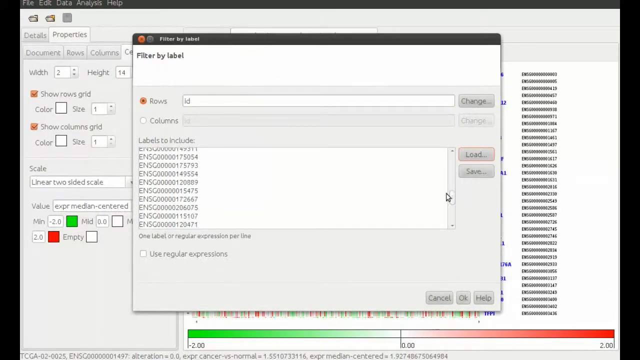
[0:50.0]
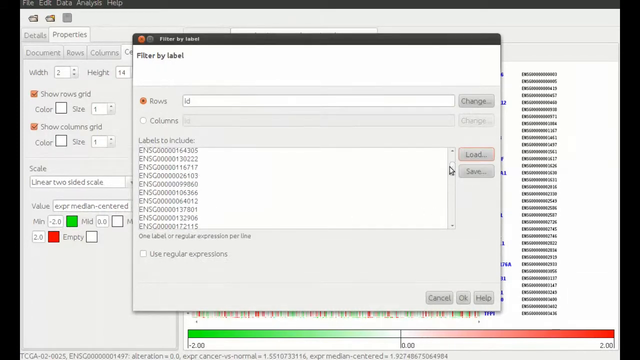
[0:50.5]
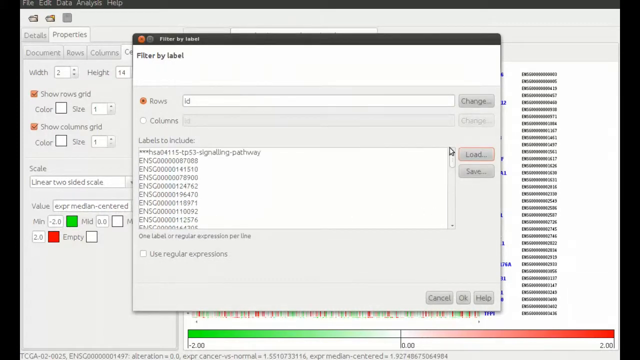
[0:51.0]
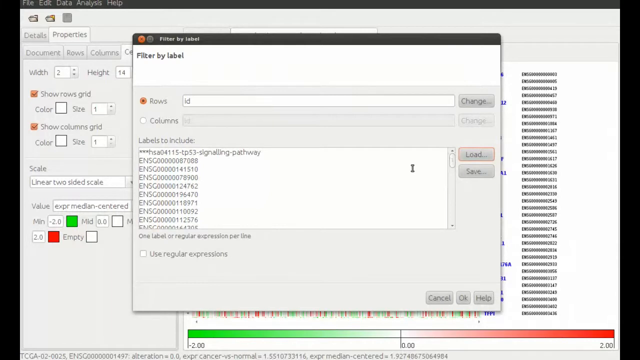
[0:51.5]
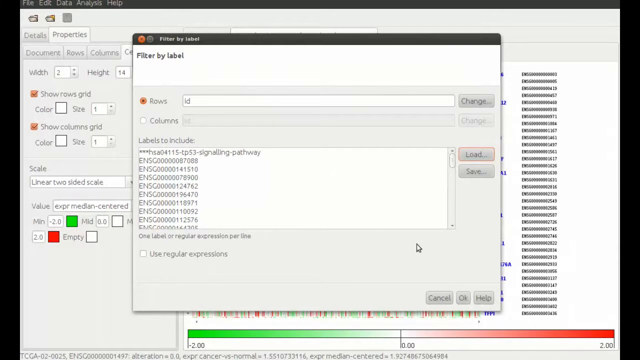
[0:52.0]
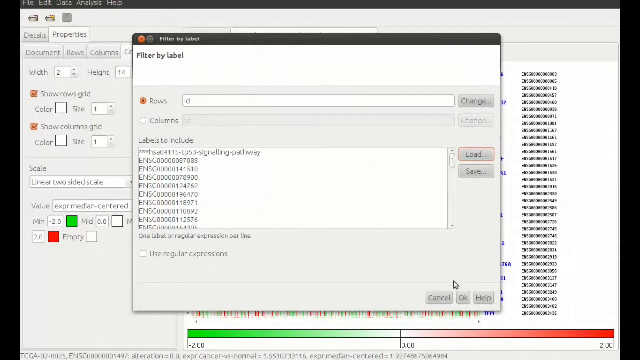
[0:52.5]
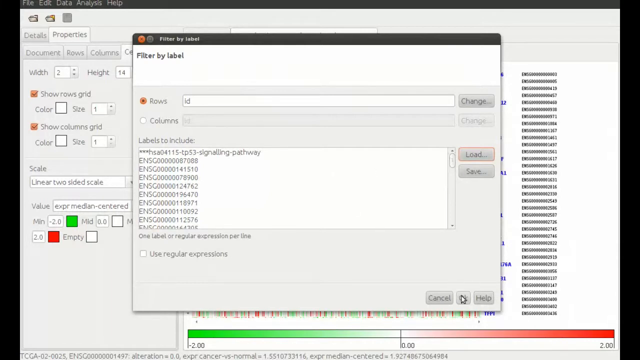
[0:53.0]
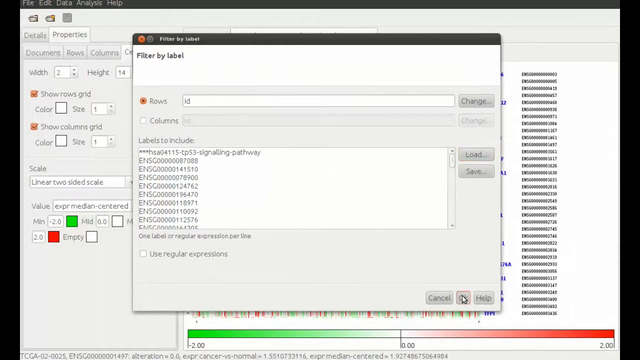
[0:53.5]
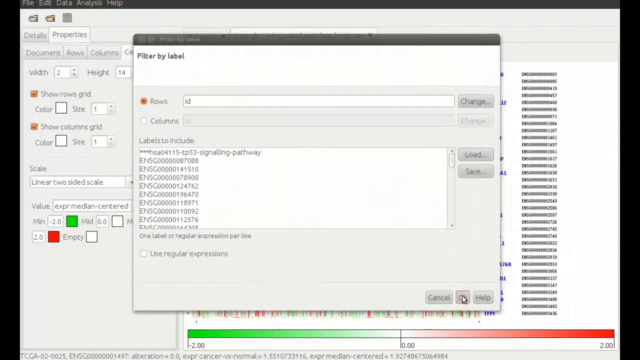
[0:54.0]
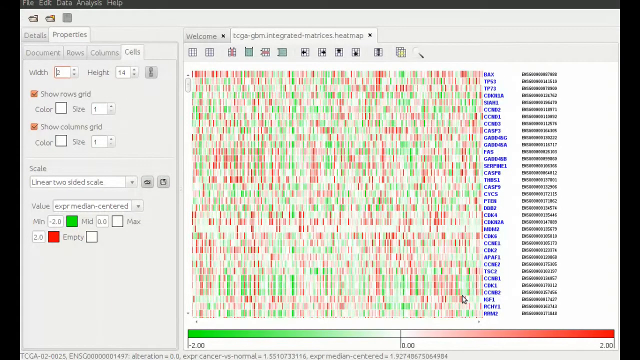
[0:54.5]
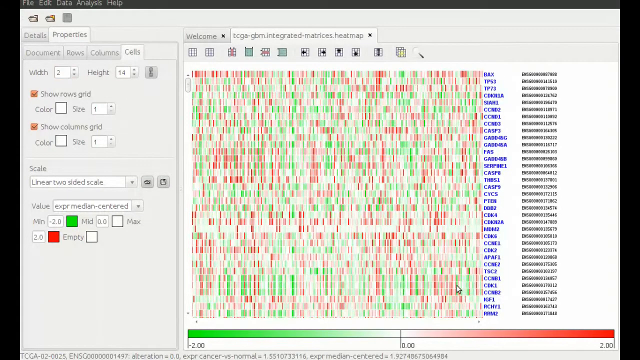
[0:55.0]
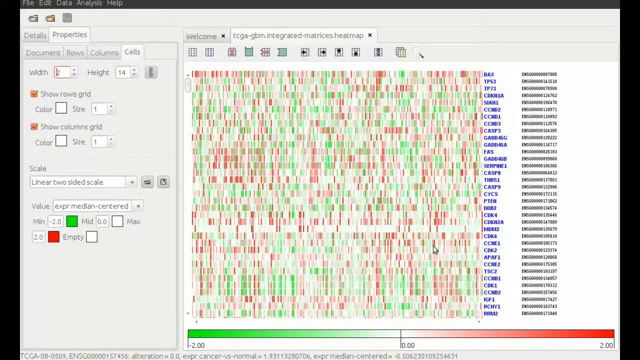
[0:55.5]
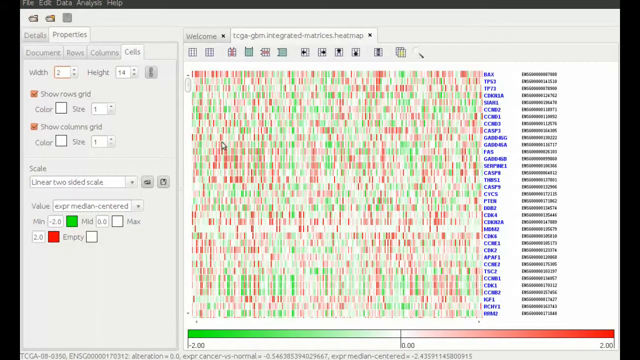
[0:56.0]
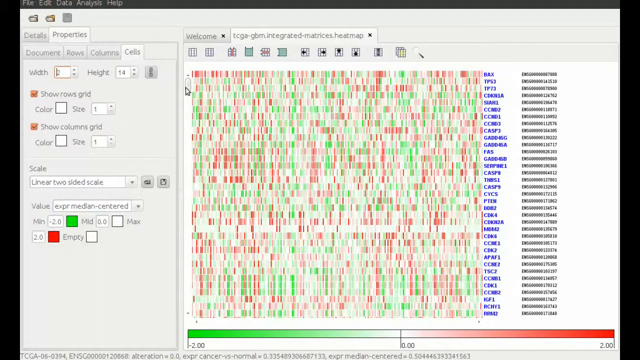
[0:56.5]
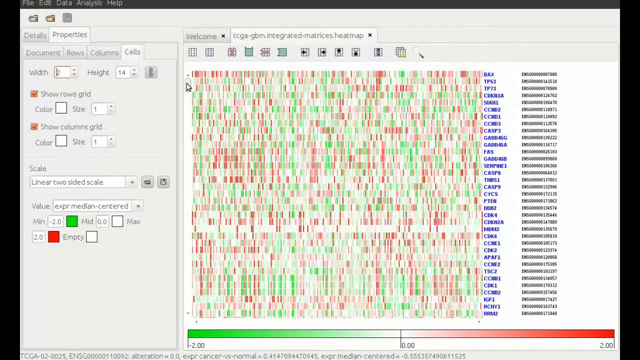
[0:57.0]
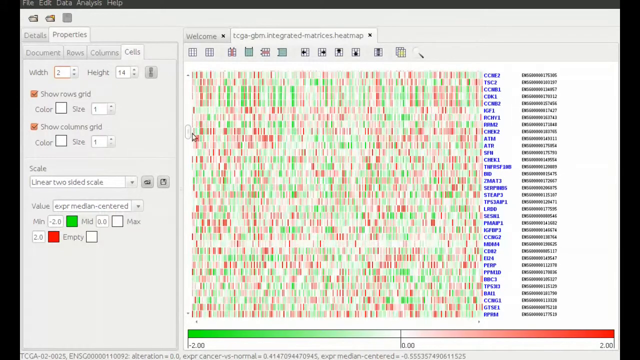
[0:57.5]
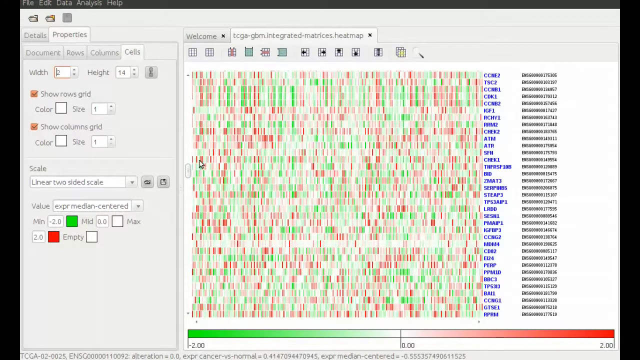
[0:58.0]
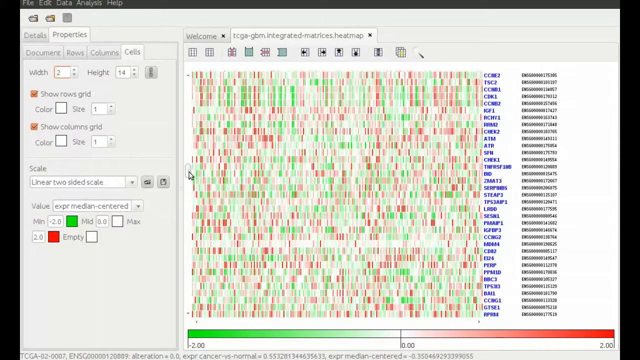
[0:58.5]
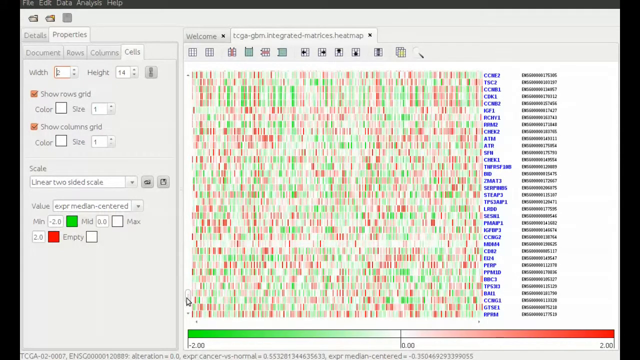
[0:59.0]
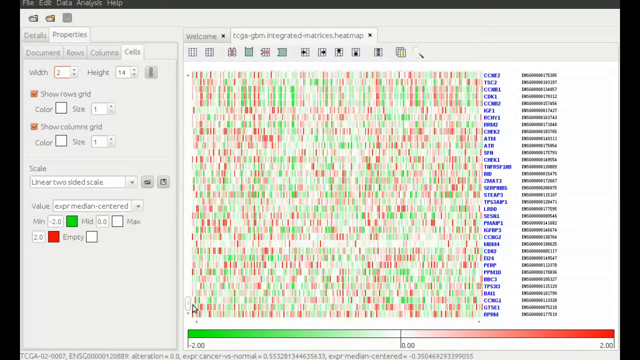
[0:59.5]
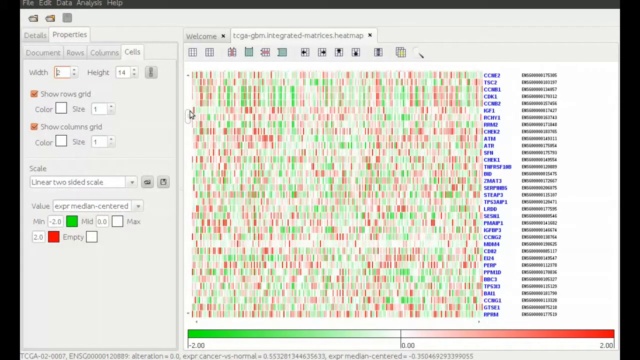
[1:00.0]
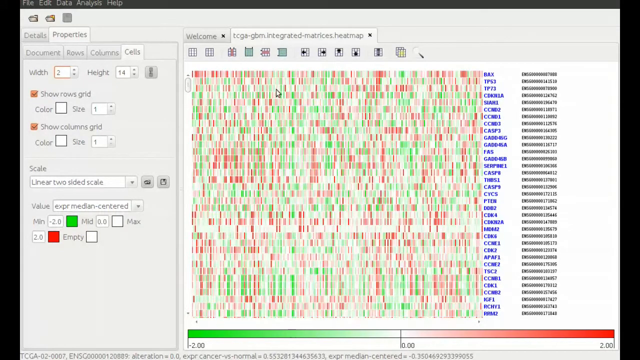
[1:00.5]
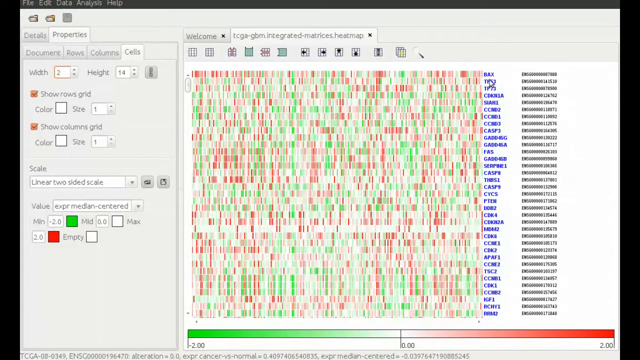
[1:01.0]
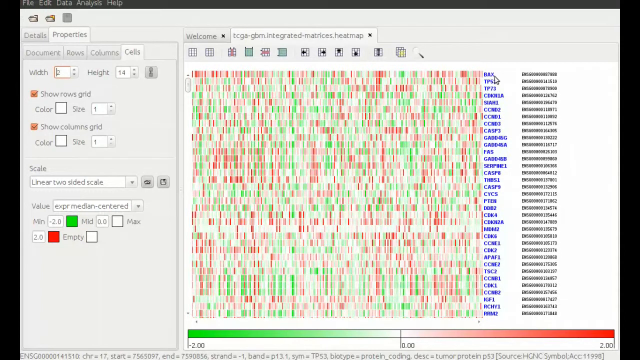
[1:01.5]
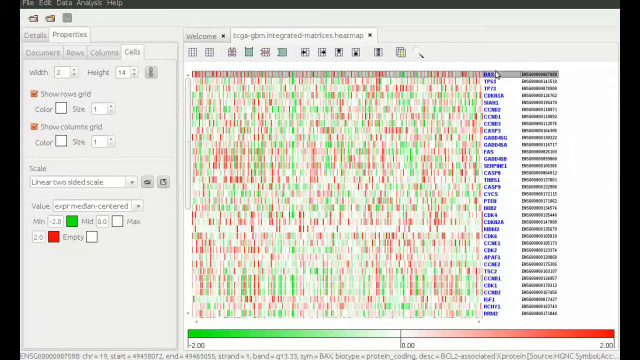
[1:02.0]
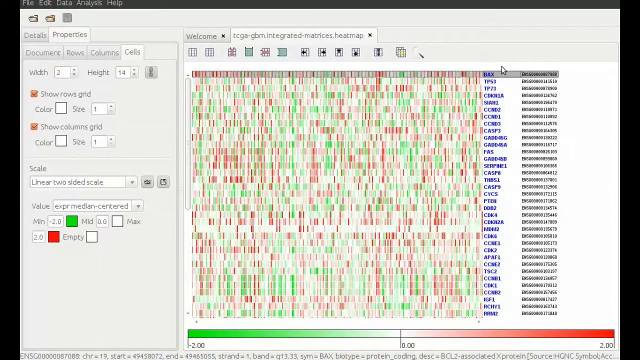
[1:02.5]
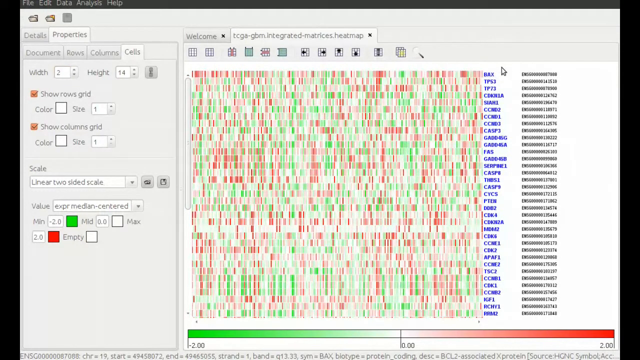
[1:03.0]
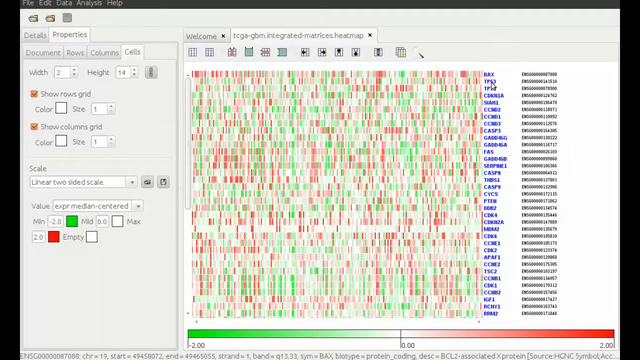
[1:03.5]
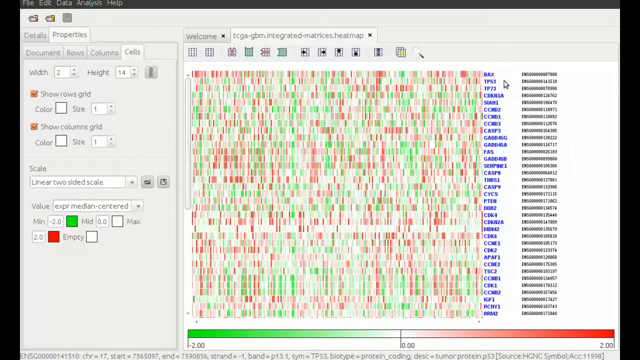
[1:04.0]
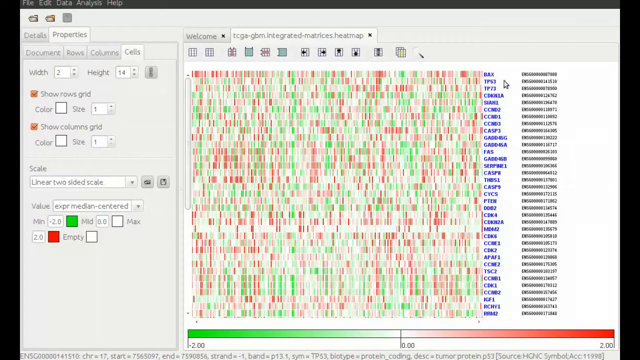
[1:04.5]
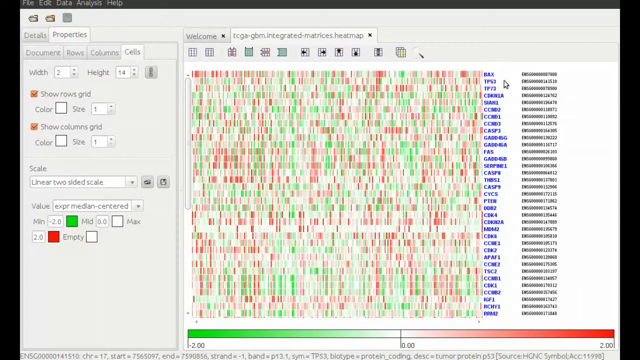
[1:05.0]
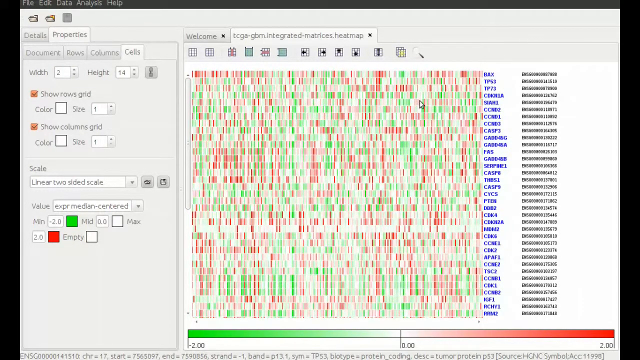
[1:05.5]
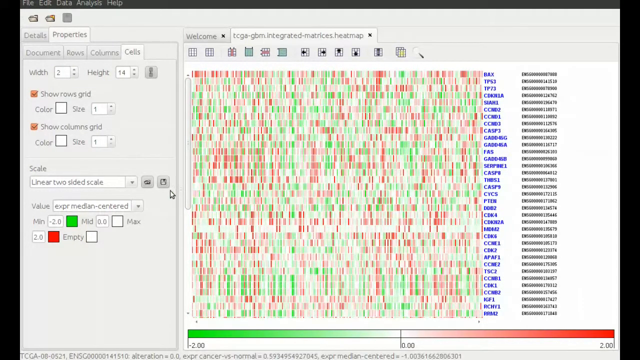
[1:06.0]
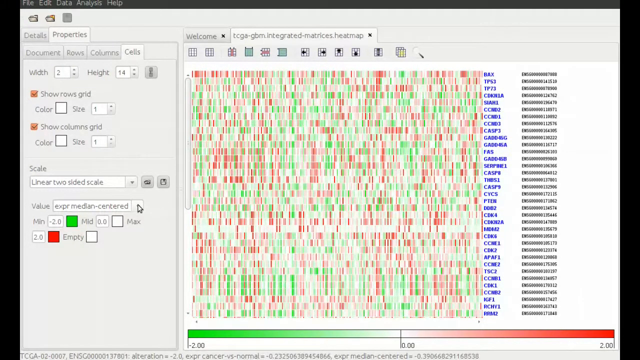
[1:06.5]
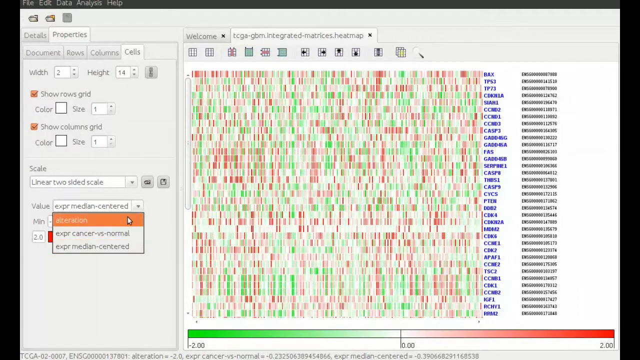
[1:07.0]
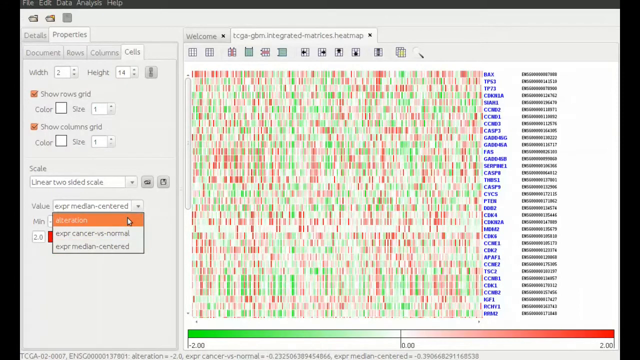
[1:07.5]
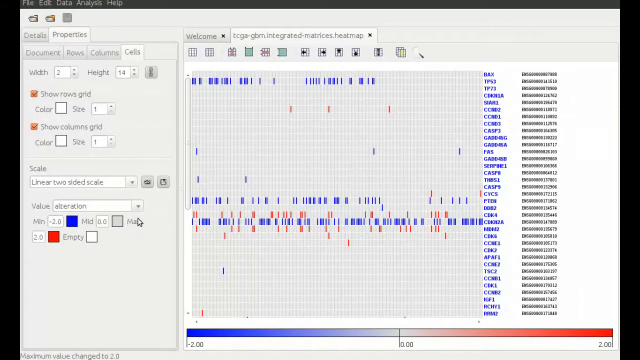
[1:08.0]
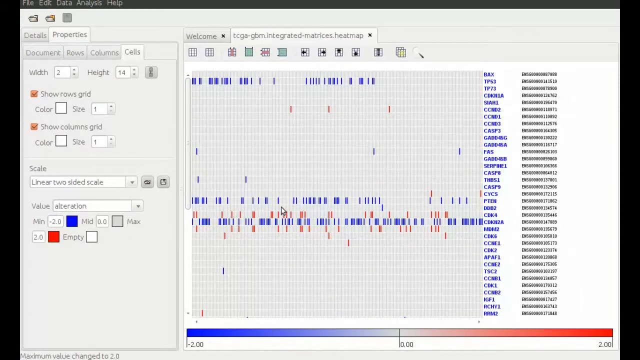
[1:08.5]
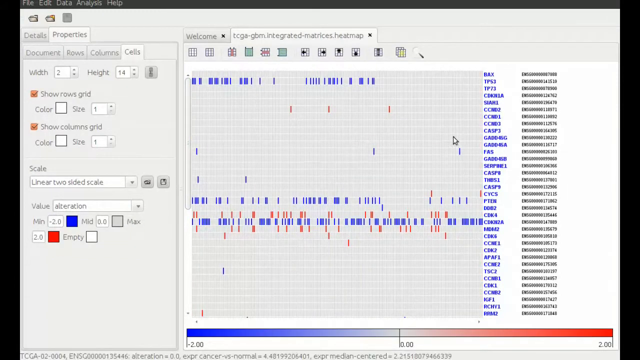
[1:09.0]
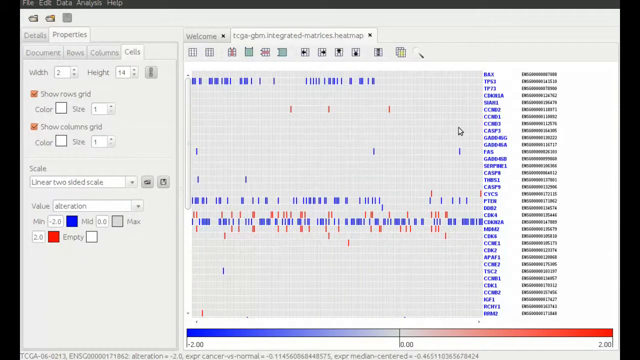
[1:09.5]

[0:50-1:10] Back in the filter by label box, many different labels populate the labels to include section, and the user scrolls up and down through them before selecting OK. They go to the heat map tab on the right side of the Gitools window, whose name begins with "tcga-gbm", and scroll downwards and then upwards on the left side. The user clicks the first, top label on the right, labeled "bax". They then go to the properties part of the window on the left, click the value drop-down menu under scale, and select the alteration option. The data on the right changes immediately, now shown with red and blue rectangular boxes.